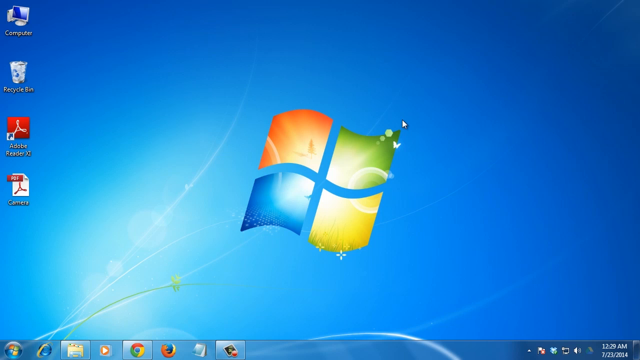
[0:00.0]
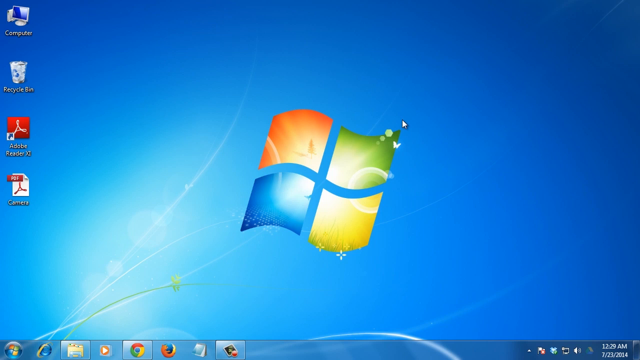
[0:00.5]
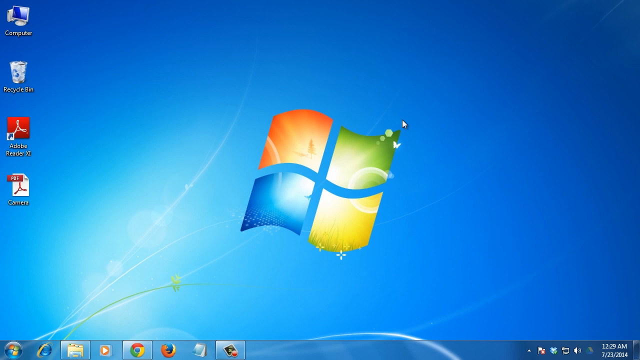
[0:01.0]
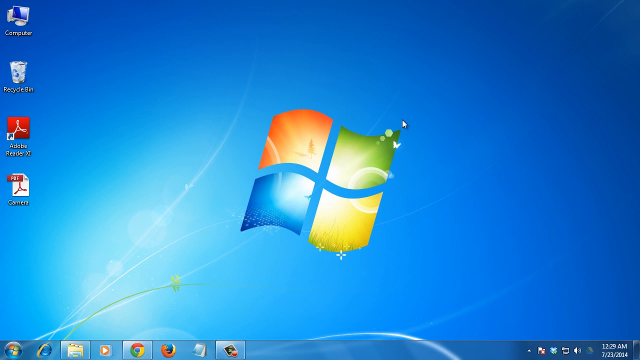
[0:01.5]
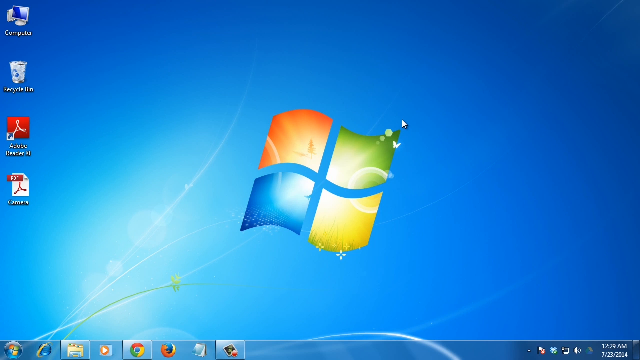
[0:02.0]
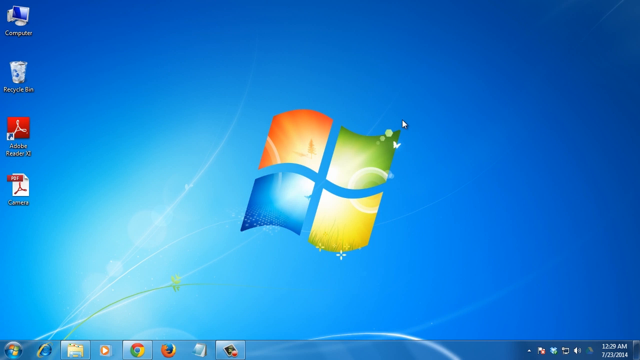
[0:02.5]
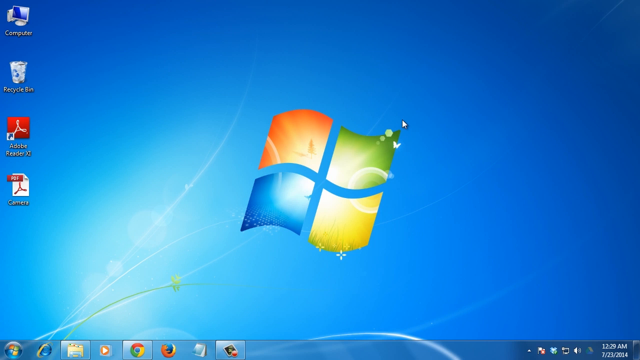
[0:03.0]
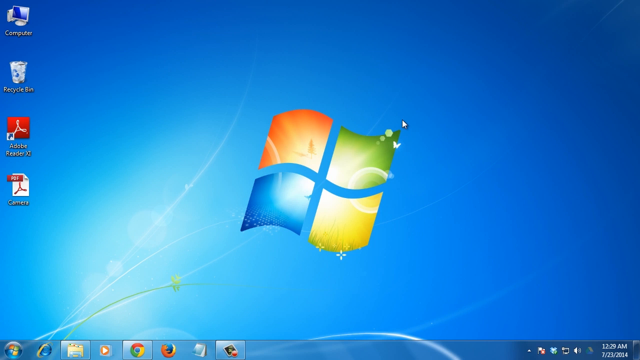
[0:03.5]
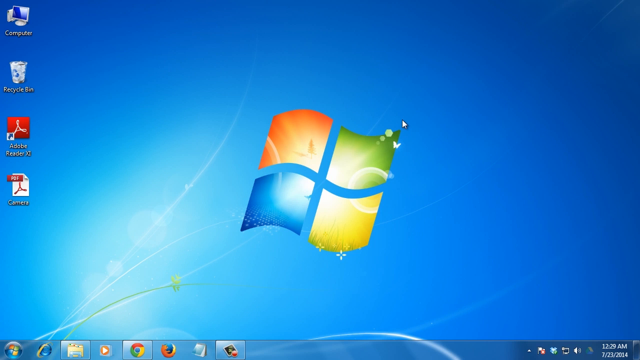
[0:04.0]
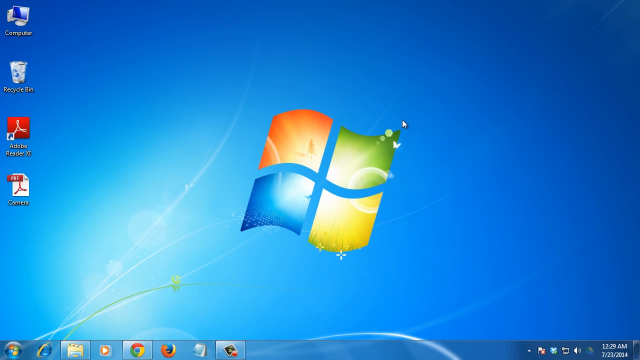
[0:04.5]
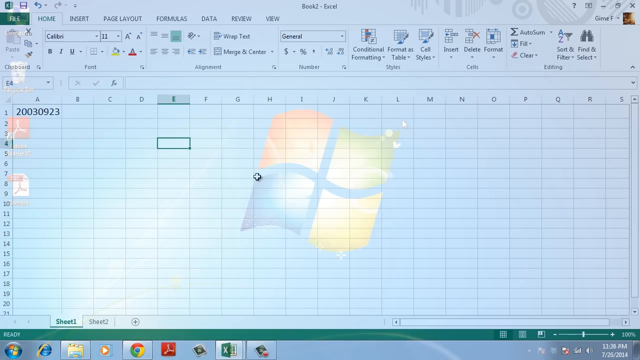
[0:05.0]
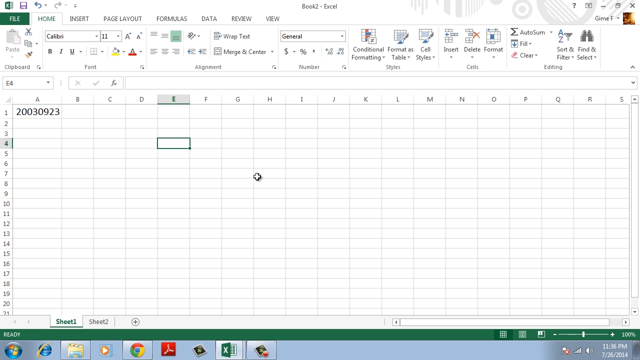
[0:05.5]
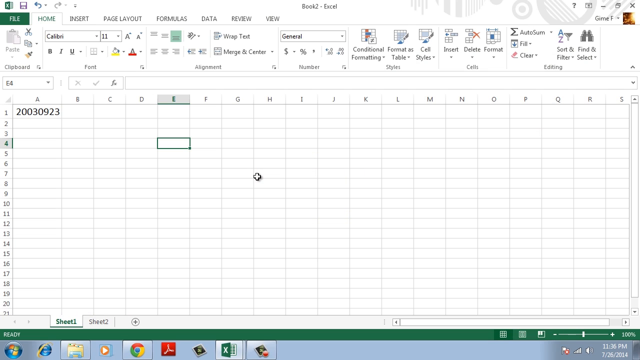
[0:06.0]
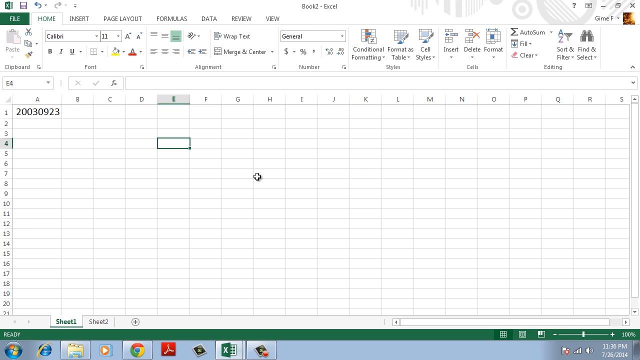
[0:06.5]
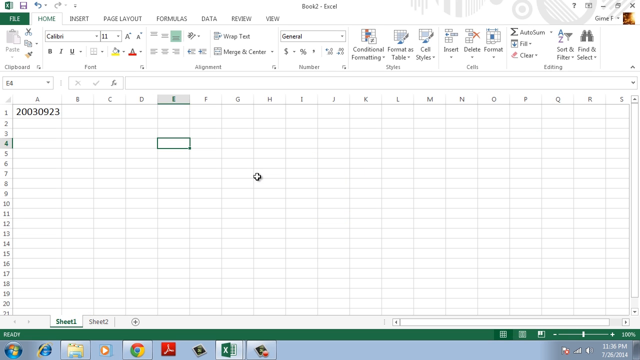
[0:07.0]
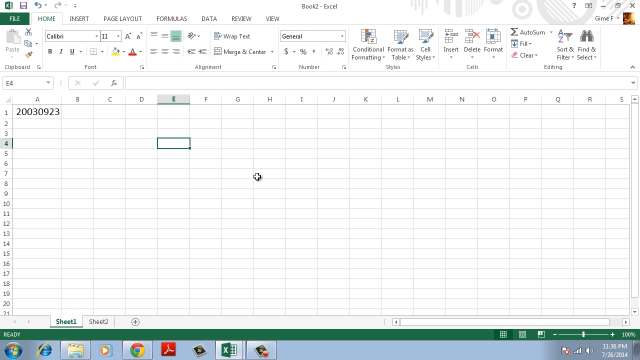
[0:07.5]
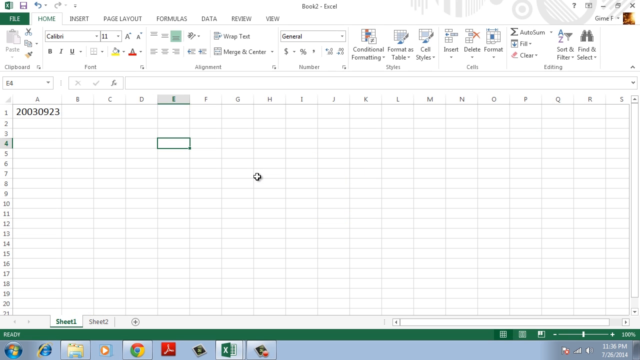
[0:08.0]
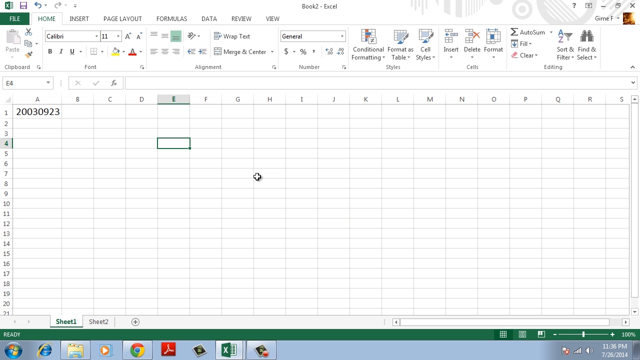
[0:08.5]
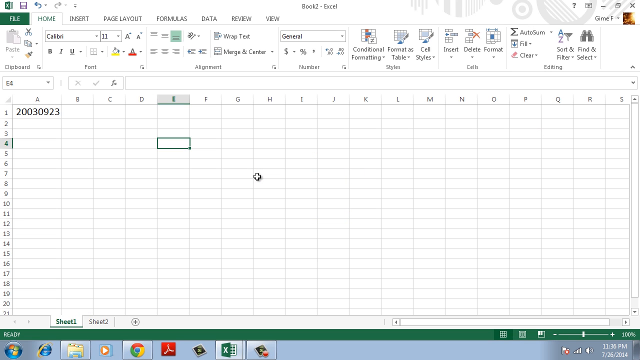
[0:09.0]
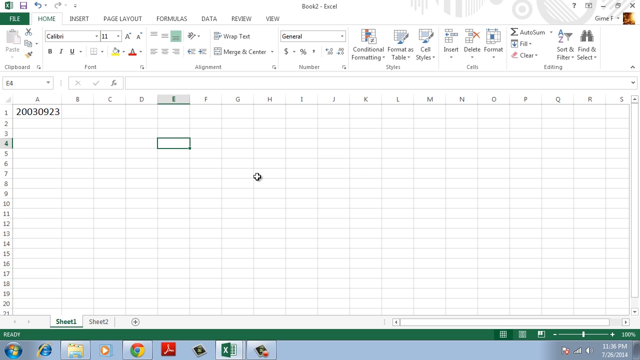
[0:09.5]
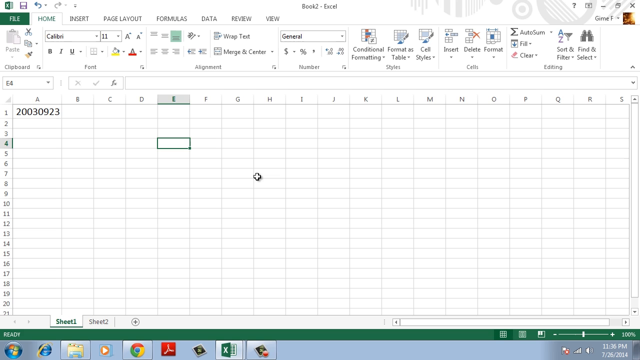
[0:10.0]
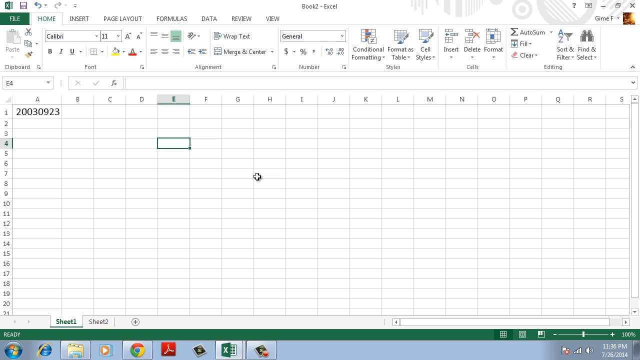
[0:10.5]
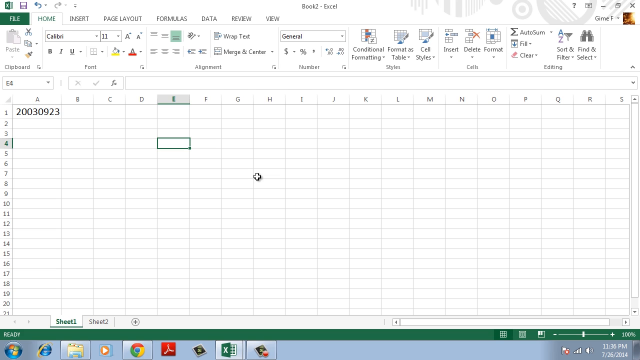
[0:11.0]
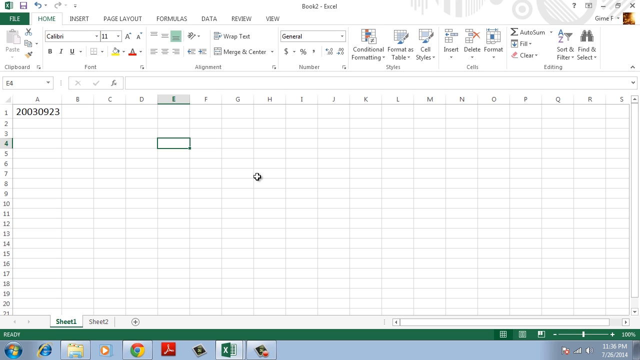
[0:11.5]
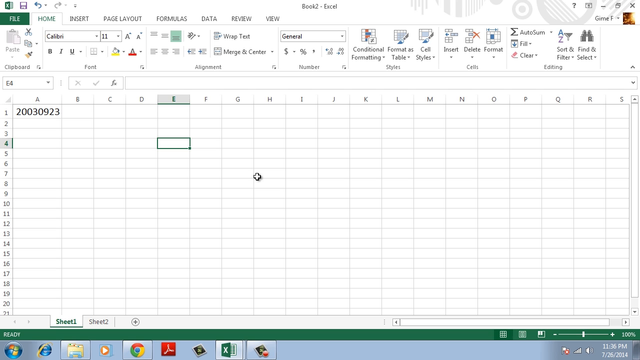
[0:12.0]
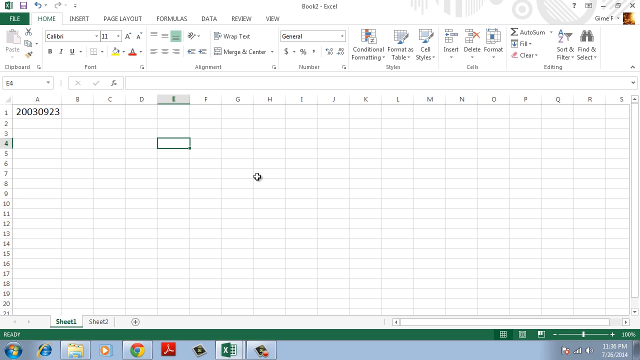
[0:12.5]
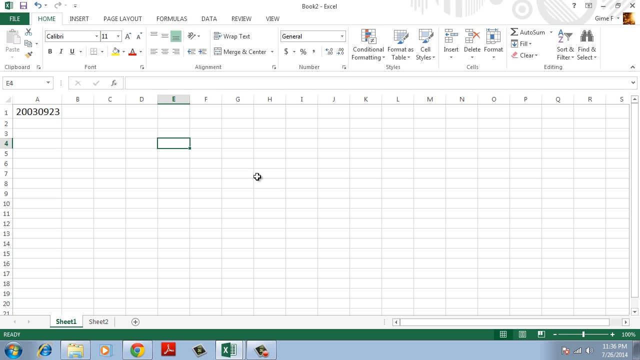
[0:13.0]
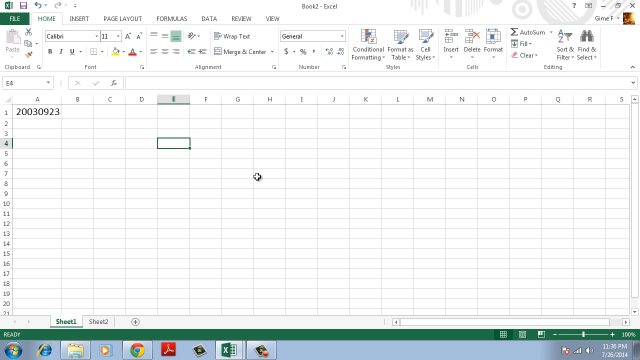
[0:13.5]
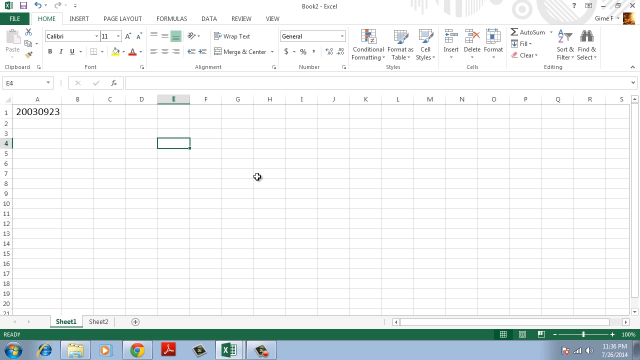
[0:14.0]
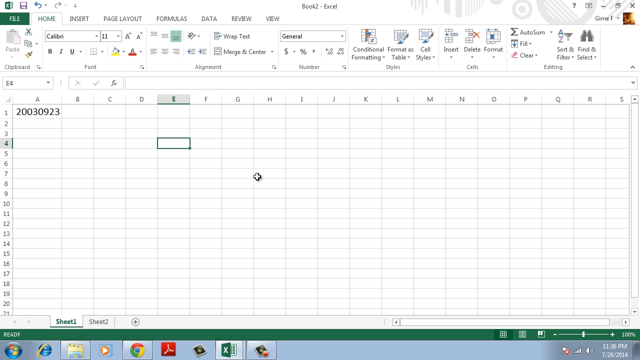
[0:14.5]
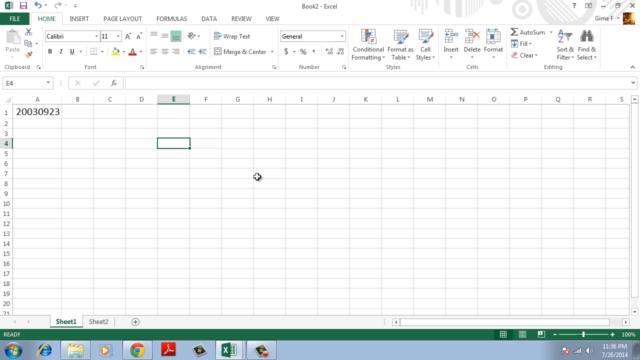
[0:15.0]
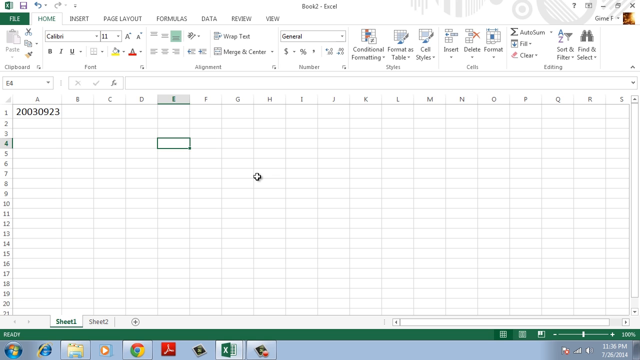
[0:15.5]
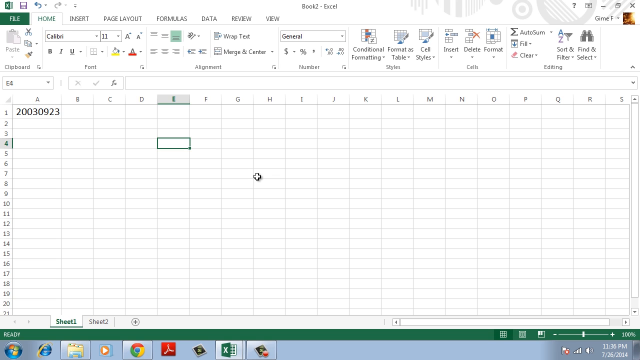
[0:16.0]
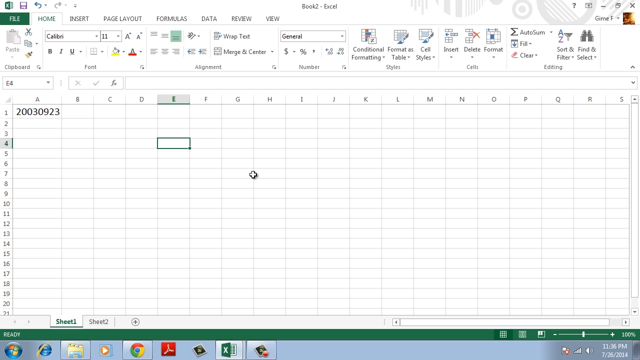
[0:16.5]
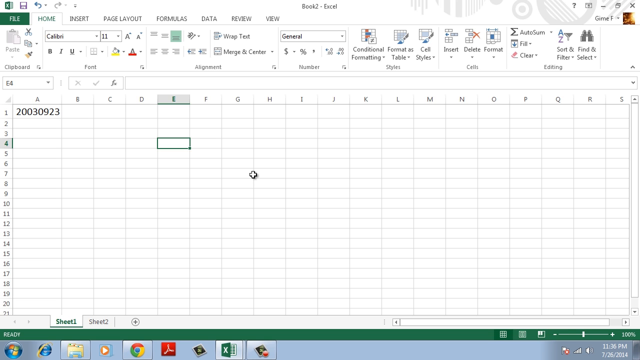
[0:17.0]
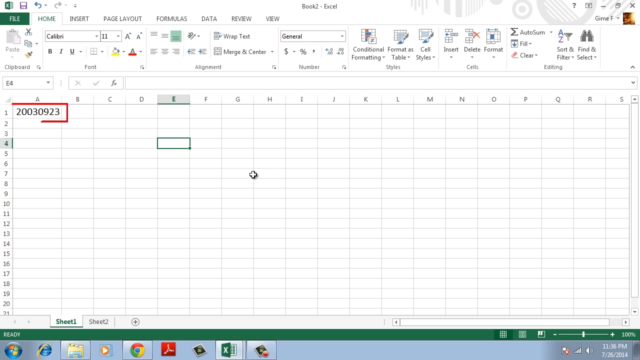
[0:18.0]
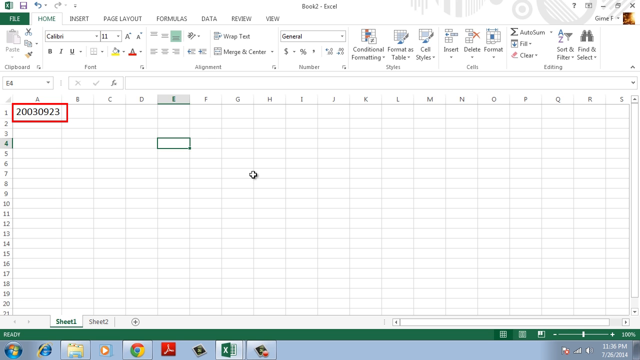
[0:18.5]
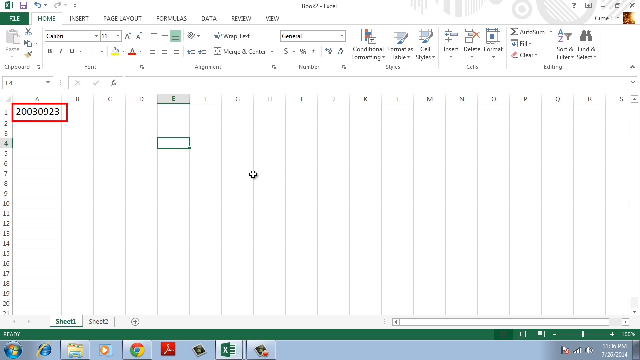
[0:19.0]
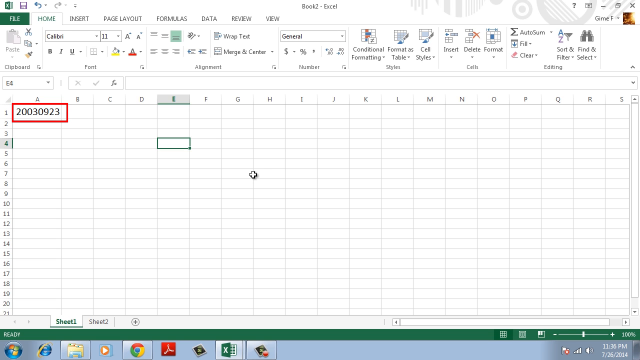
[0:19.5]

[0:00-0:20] The video opens on a Windows 7 or Windows Vista desktop, with at least two or three programs already open but minimized. Excel then opens on what looks like a blank sheet, but the first cell of the first row, cell A1, already contains the value 20030923. Another cell, E4, is already selected. Apart from that, there is no text in the Excel file. The bottom taskbar shows Google Chrome minimized, along with Notebook and another minimized window.